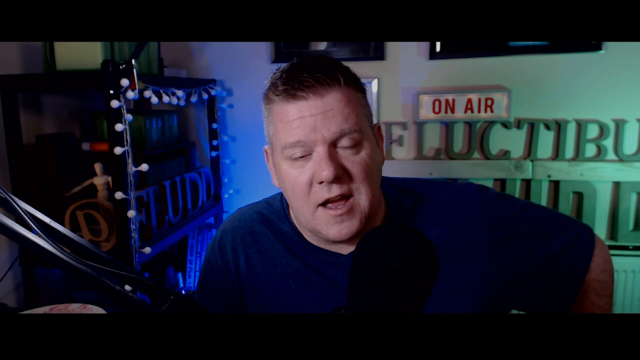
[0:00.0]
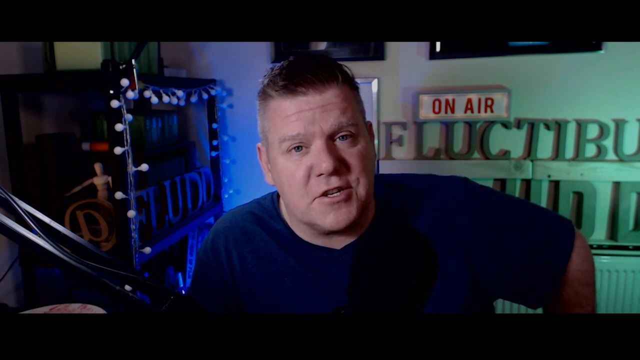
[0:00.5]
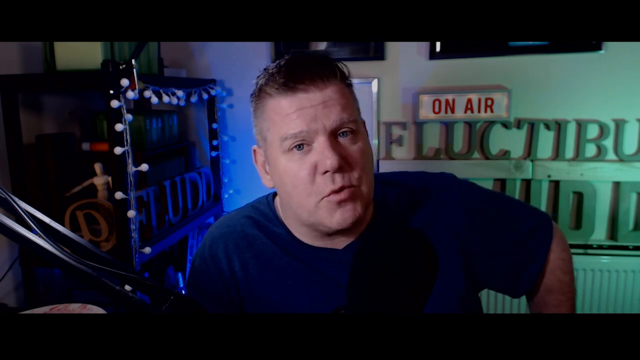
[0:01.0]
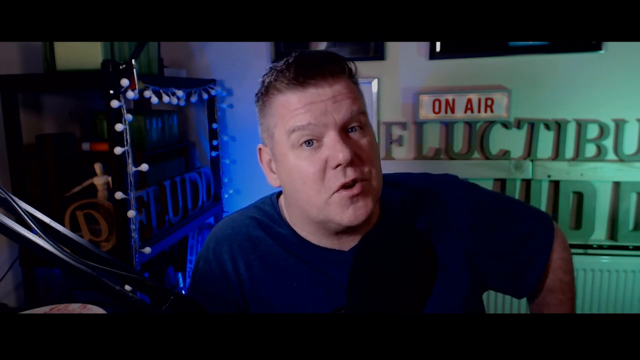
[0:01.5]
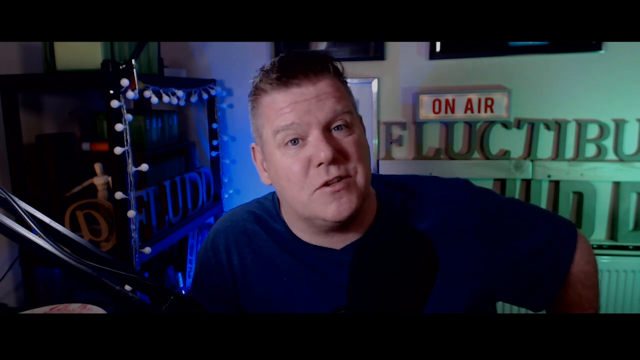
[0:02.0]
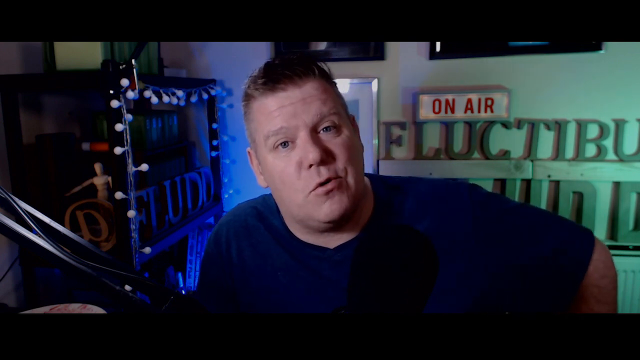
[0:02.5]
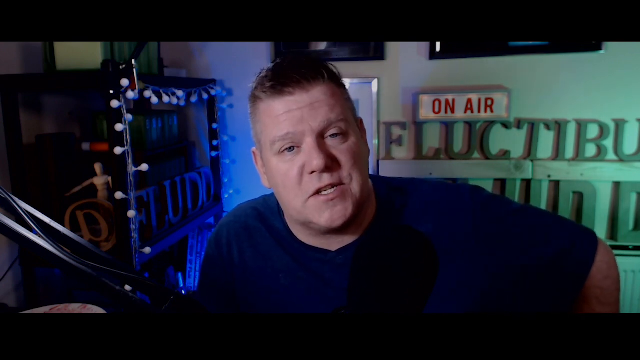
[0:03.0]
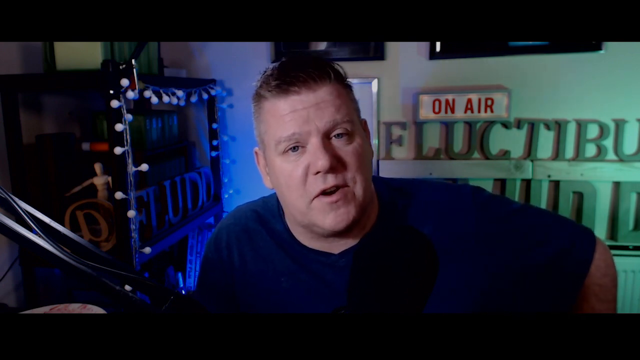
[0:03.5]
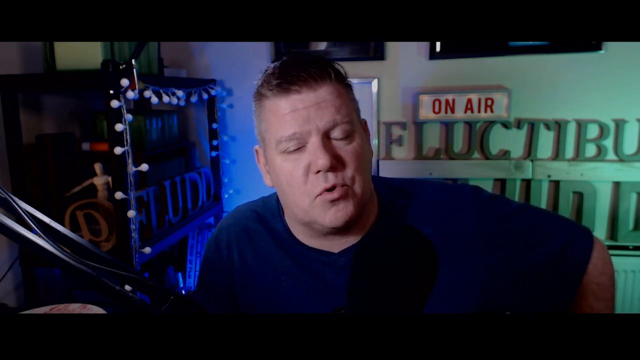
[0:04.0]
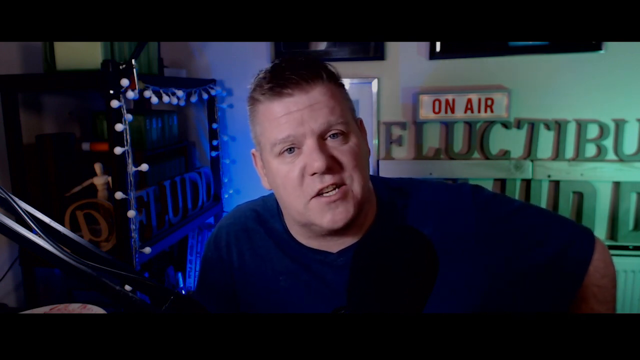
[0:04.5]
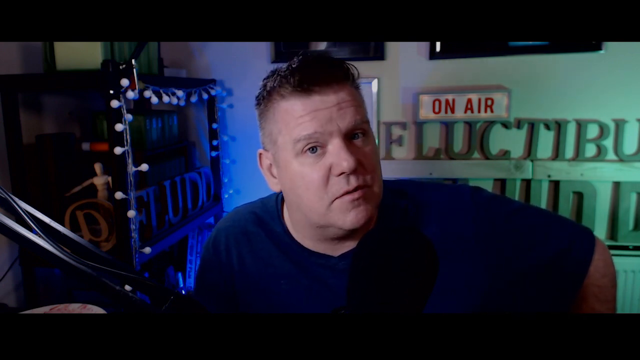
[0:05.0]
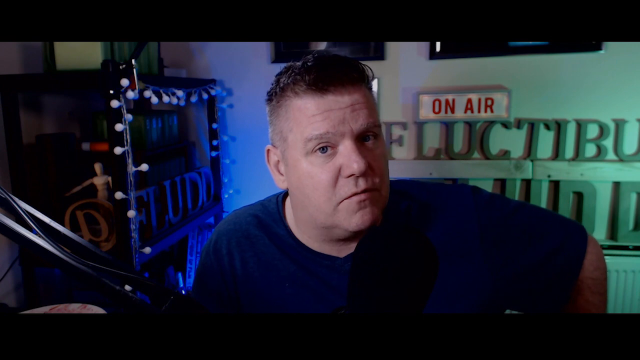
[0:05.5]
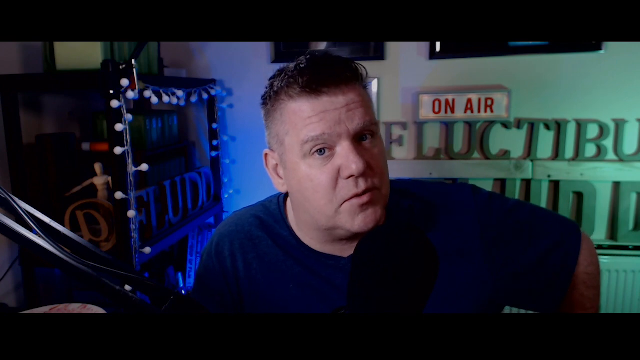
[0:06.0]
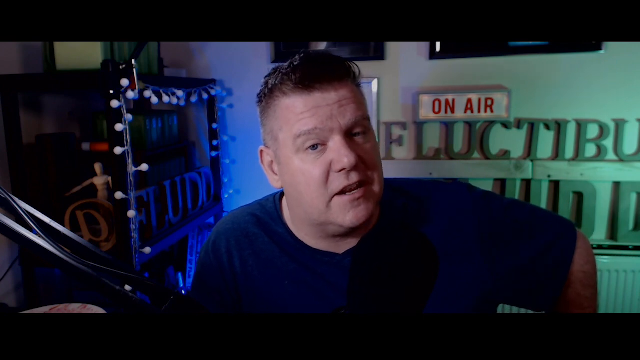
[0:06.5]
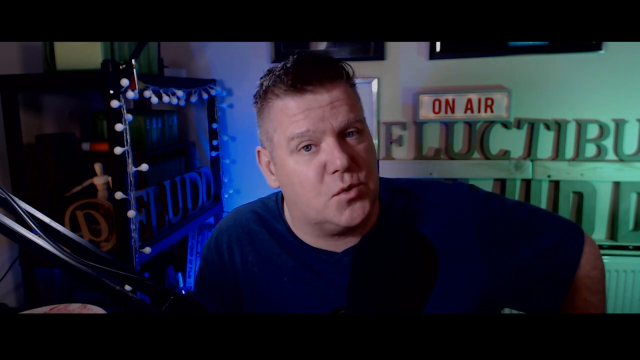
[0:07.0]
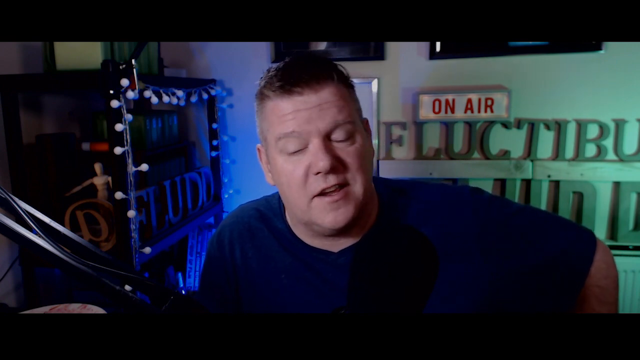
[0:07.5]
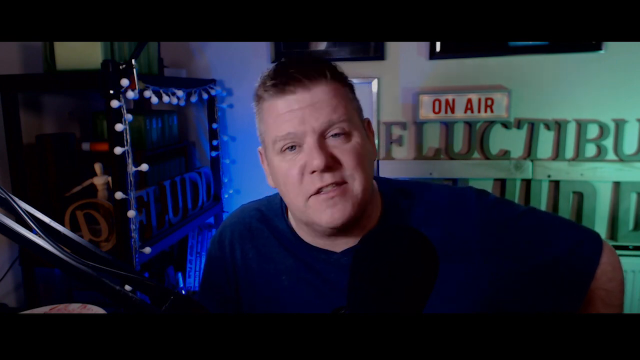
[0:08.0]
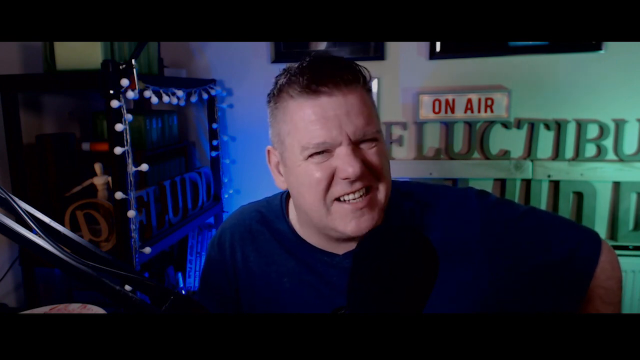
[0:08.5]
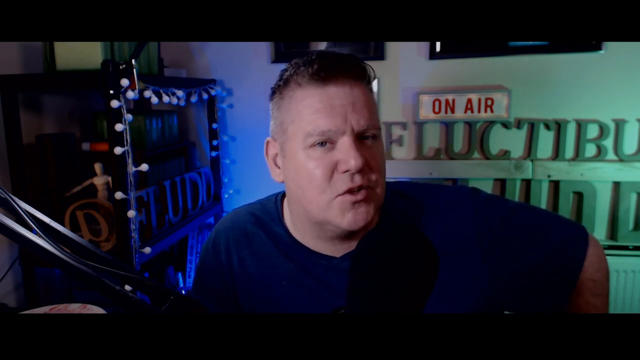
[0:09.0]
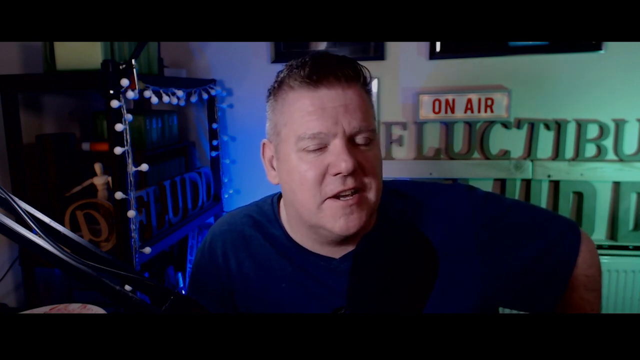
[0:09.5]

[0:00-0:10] A man with light brown hair, kind of longer at the top and shaved at the sides, sits in what kind of looks like a home studio. He wears a blue short-sleeve shirt. On the wall behind him is a little sign, a white rectangular box with red letters that read "On Air". To the left are shelves, with a little action figure on one of them and letter blocks that look like they say "@fludd". On the wall behind him, blocks look like they say "Fluctibus Fludd". The left side of the room kind of has blue lighting, and the right side has green lighting. The man is just sitting in his chair talking to the camera.